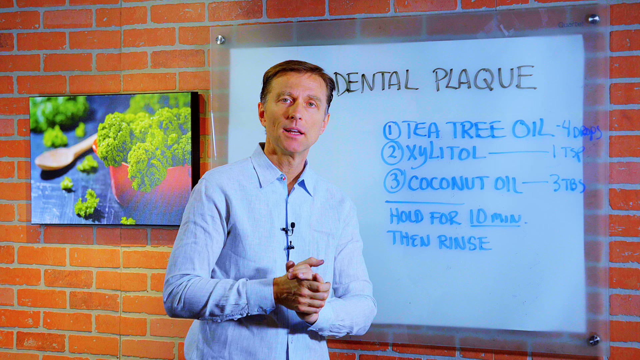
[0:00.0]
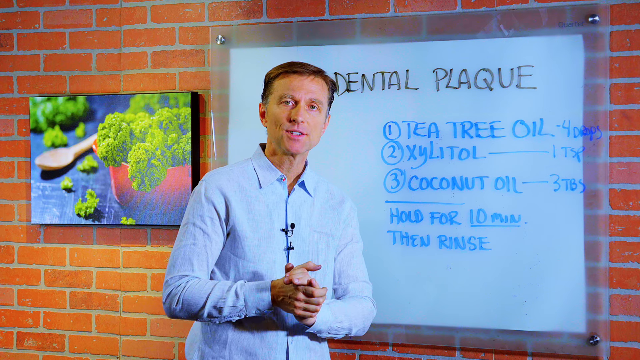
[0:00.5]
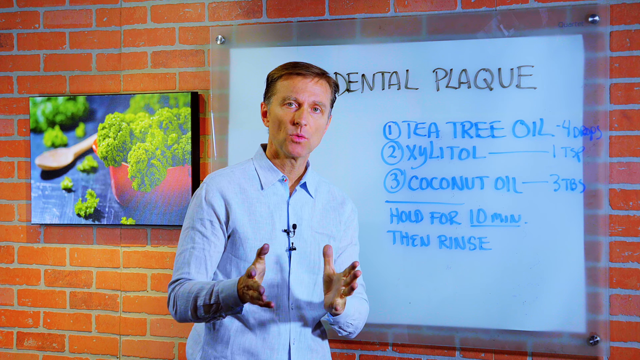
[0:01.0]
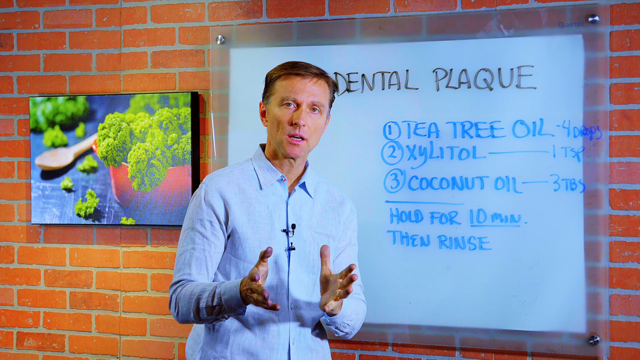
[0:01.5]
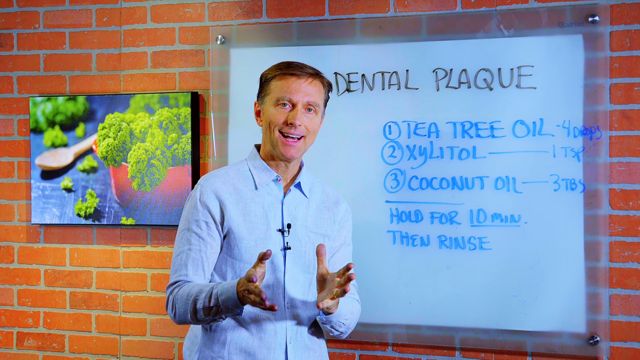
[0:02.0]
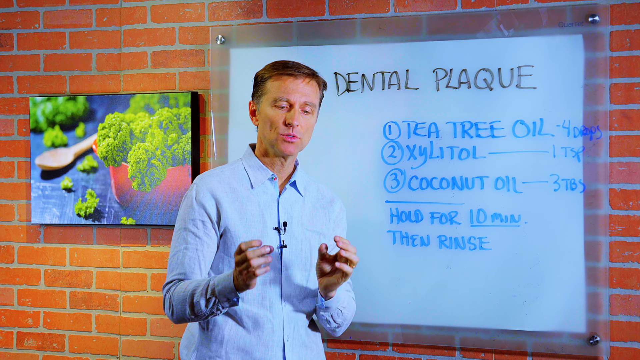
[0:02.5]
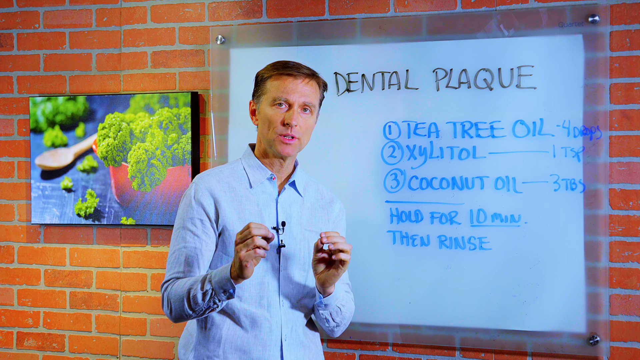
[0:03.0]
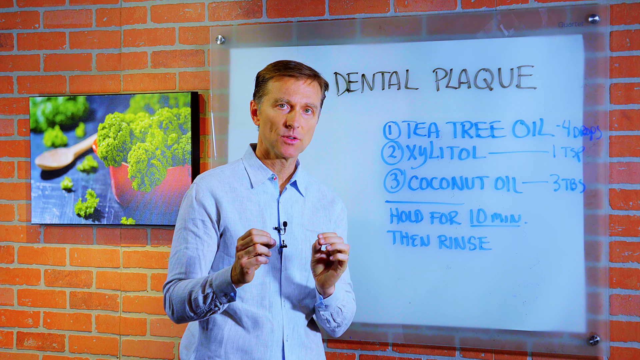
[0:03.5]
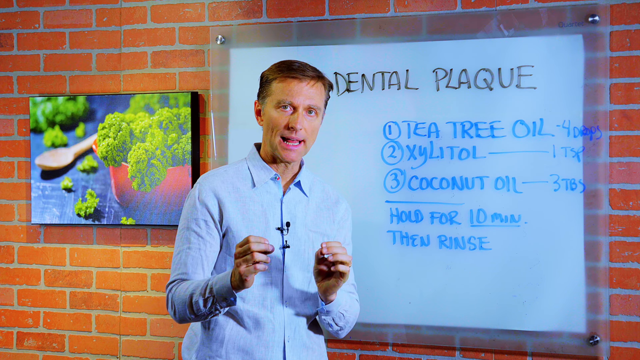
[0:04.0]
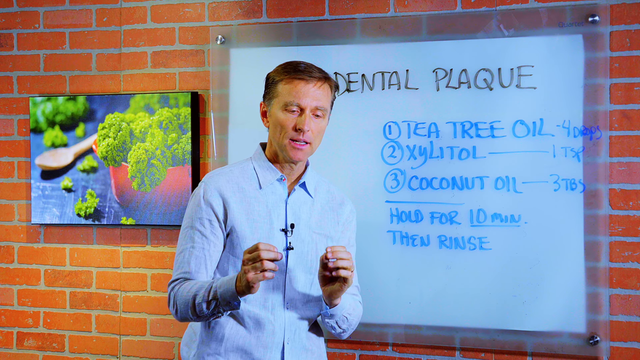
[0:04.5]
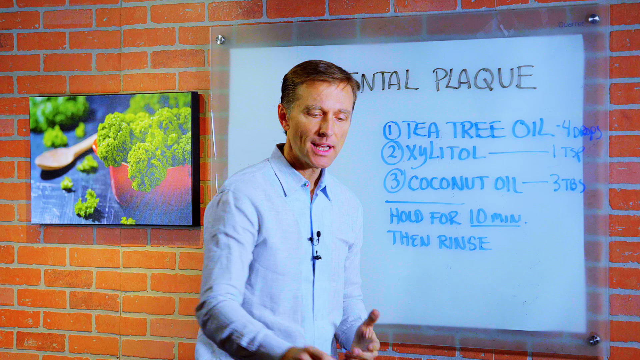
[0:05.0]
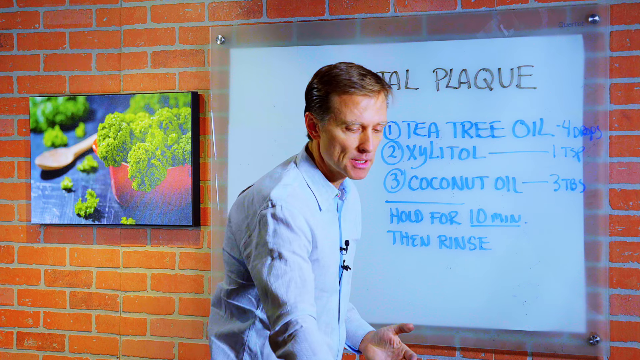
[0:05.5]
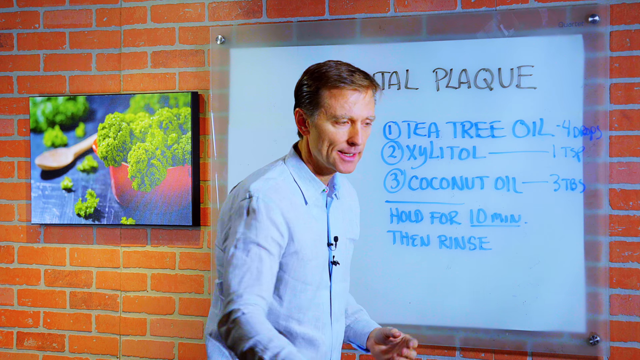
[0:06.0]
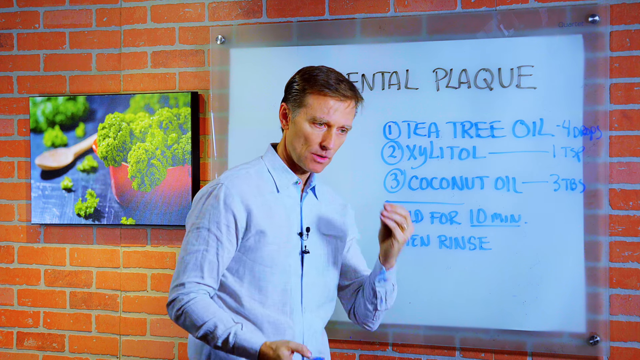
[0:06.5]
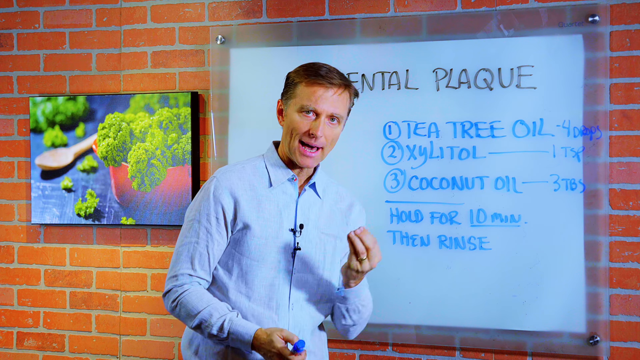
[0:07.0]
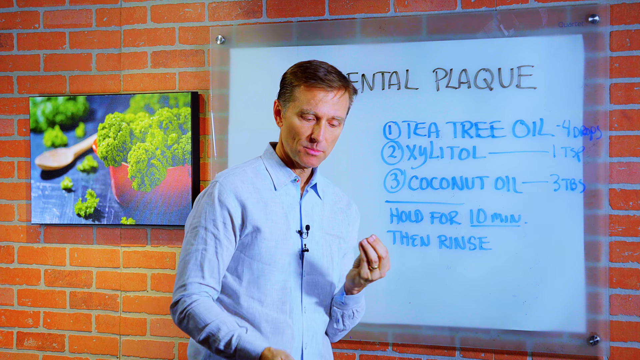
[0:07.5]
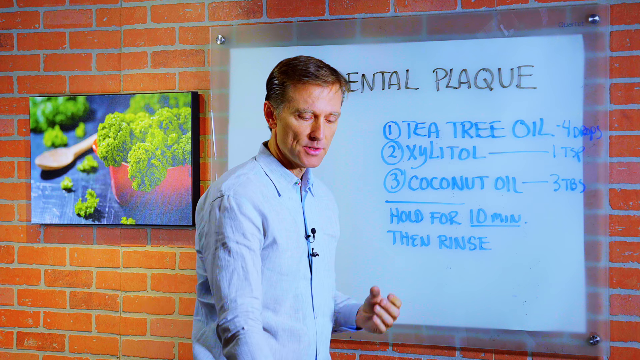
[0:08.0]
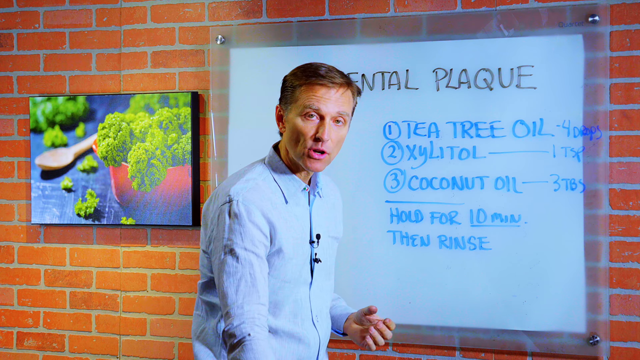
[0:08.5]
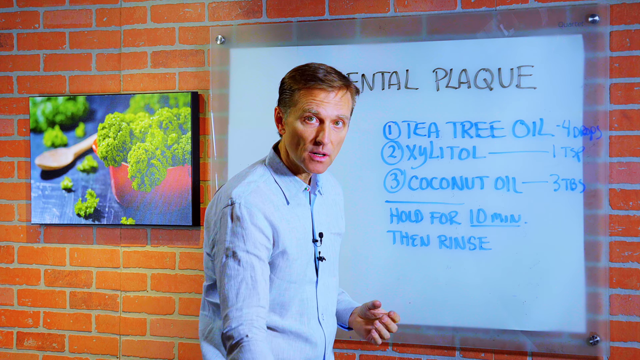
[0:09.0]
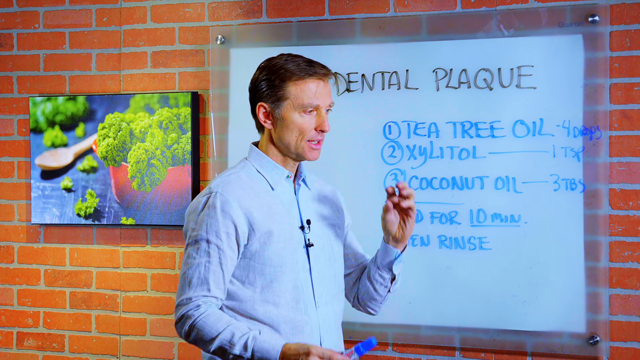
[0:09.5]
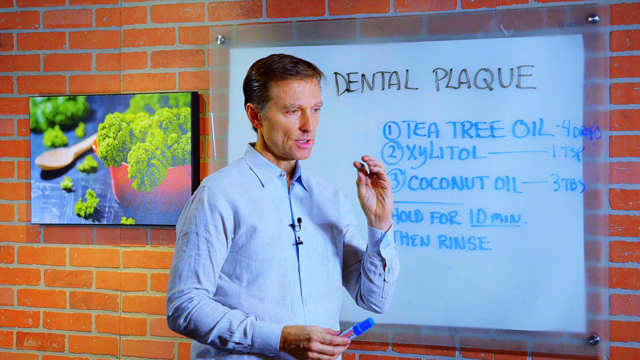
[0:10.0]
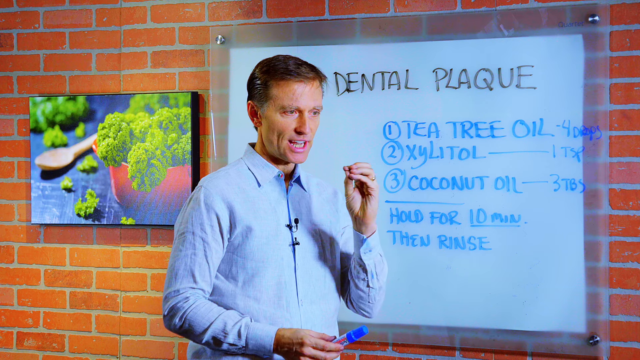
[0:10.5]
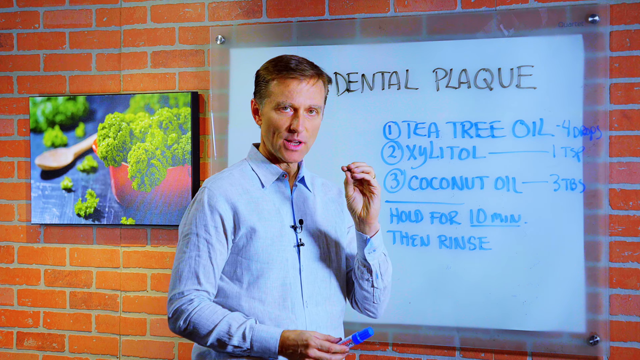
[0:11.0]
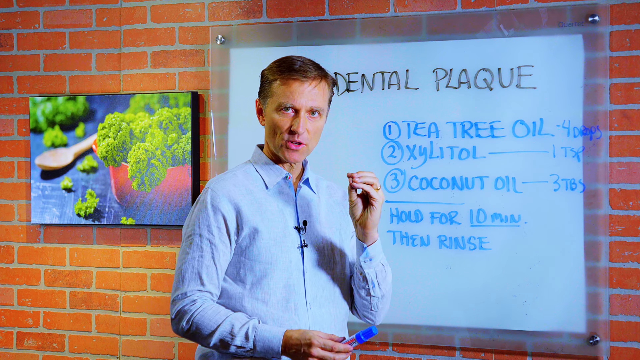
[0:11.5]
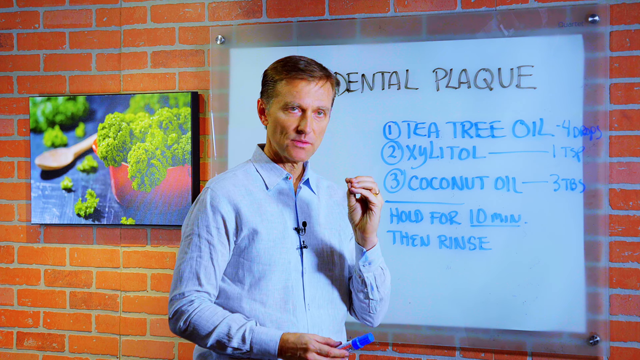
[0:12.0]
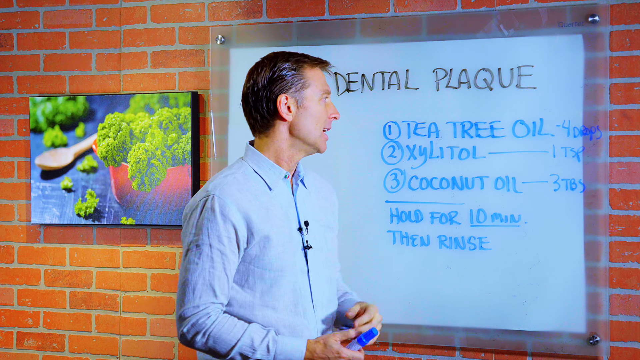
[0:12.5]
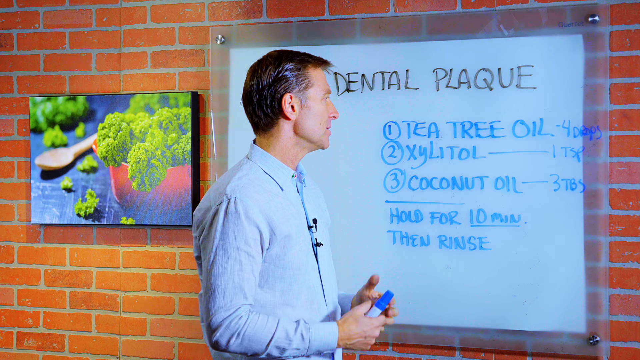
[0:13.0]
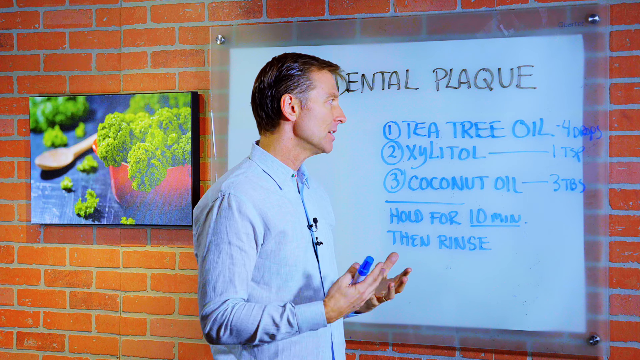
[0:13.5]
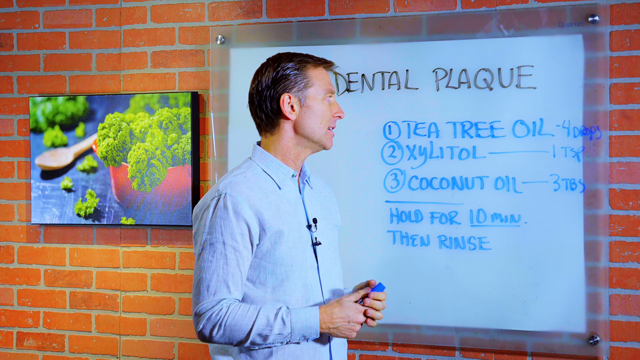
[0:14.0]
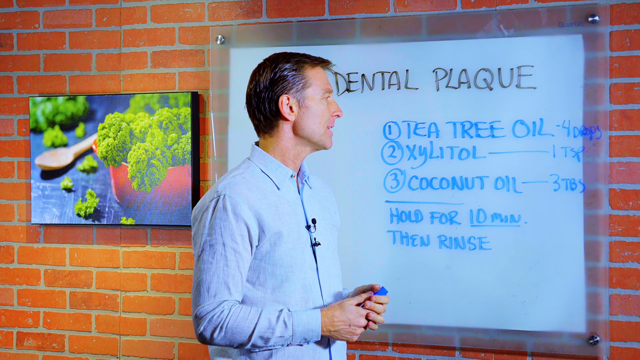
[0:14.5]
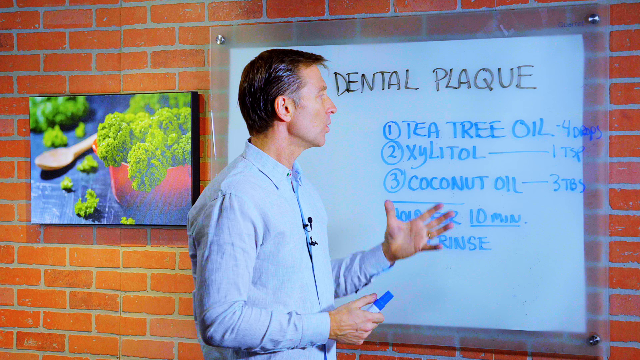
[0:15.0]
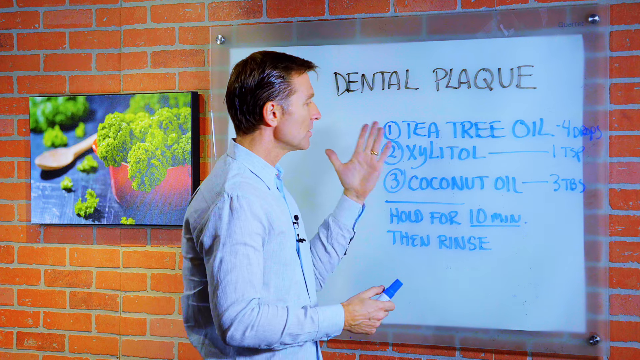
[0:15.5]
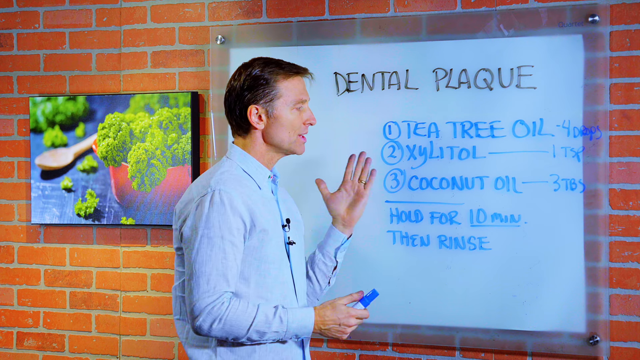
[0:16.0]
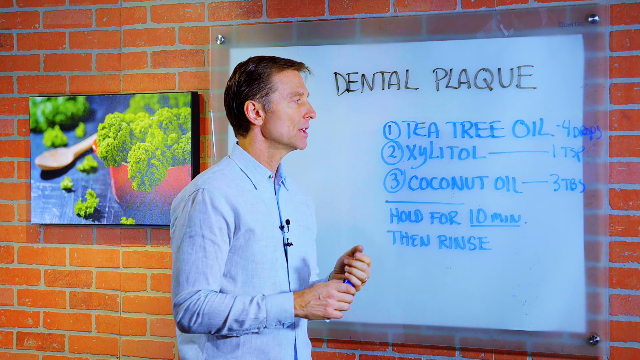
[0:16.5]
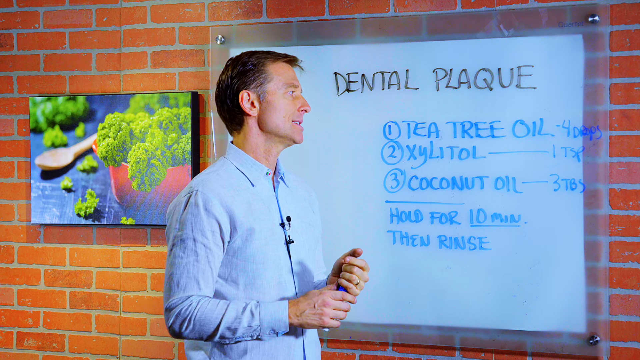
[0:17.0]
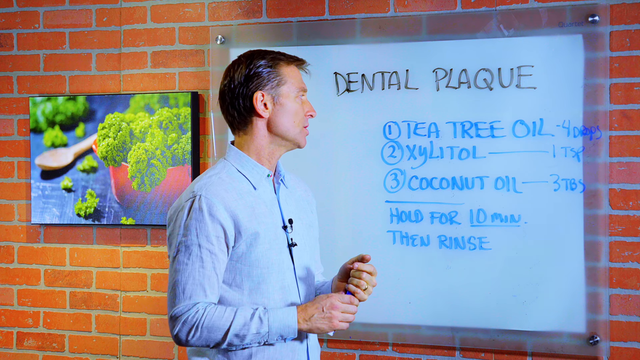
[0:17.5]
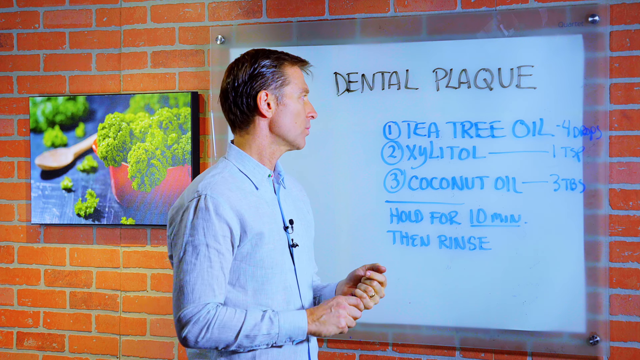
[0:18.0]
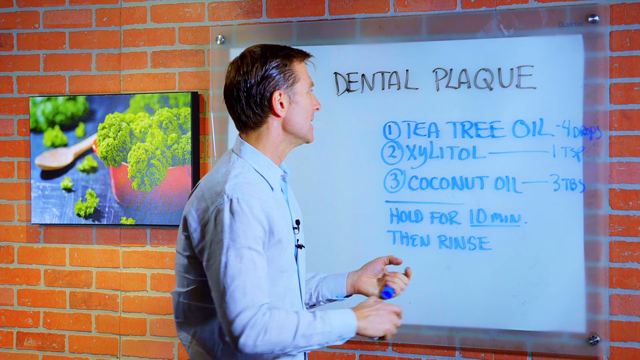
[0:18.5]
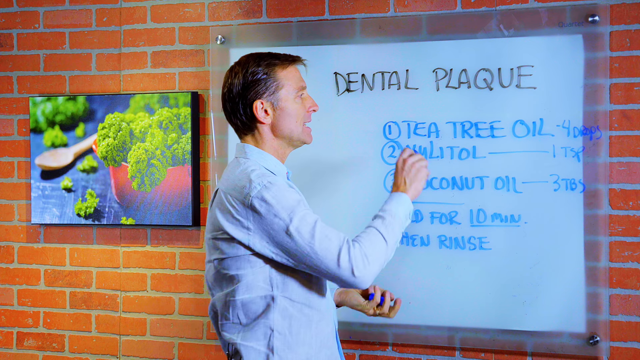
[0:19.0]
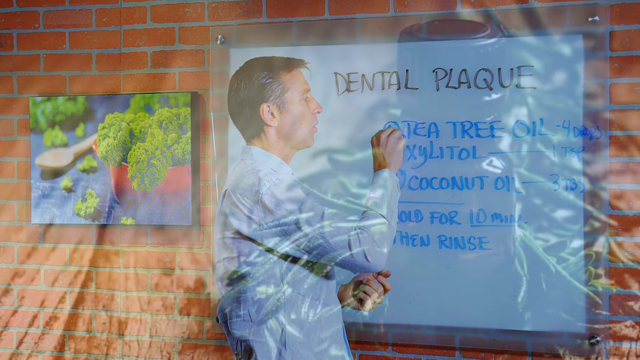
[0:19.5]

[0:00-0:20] A man, probably in his mid-to-late 30s, wearing a light blue button-down shirt, stands in front of a wall board with a transparent plate on which notes are written. The top title says "dental plaque", and the numbered points list tea tree oil, xylitol and coconut oil, each with a measurement: four drops of tea tree oil, one teaspoon of xylitol and three tablespoons of coconut oil. The instructions read "hold for 10 minutes and then rinse." The wall board is screwed into a brick wall, and to the left is a painting or photo of a baby cauliflower in a bowl, with some broccoli crown strewn on the surrounding table and a wood spoon next to the bowl. The man speaks, sometimes gesturing with his hand, particularly his left hand with the fingers all pressed together to the thumb, and he stares at the wall board.